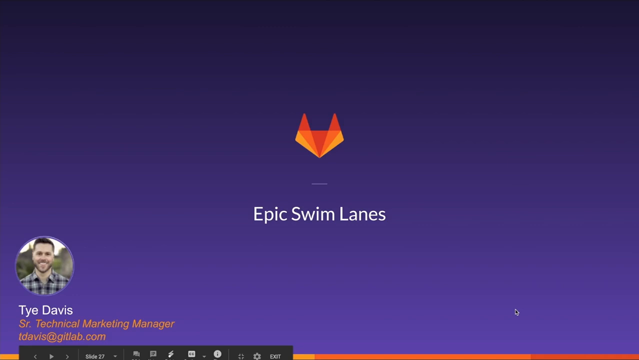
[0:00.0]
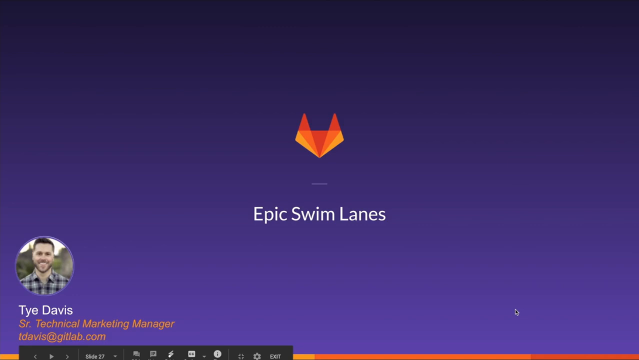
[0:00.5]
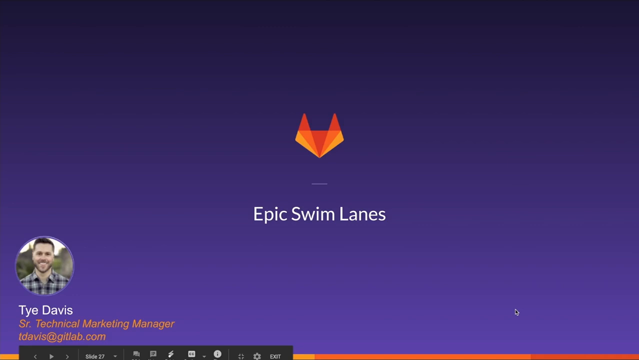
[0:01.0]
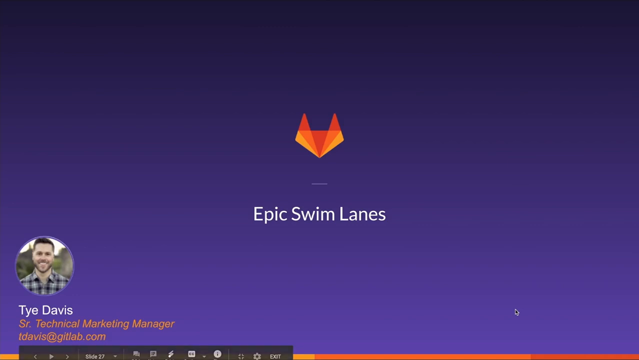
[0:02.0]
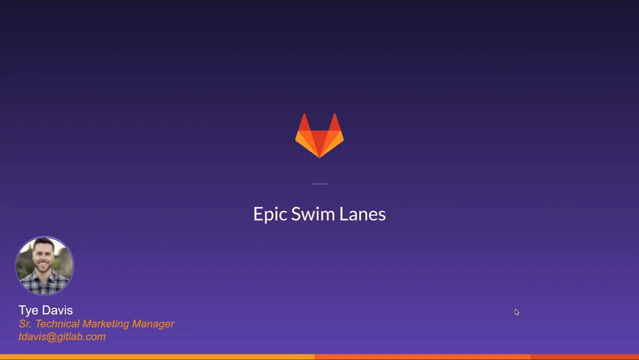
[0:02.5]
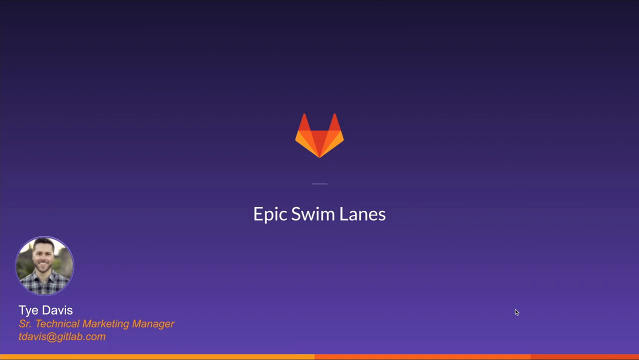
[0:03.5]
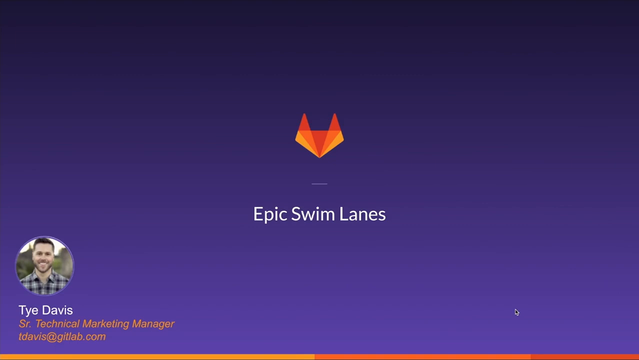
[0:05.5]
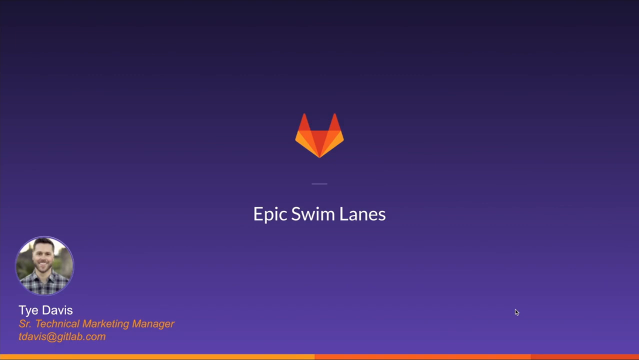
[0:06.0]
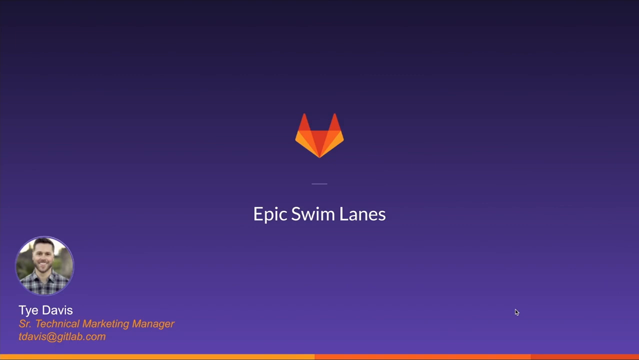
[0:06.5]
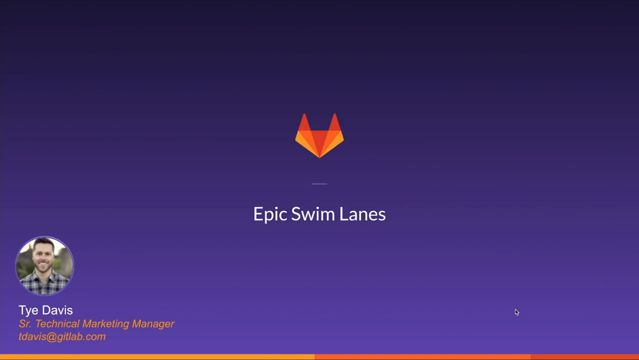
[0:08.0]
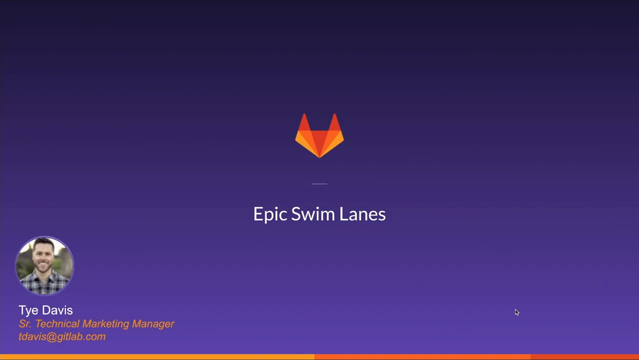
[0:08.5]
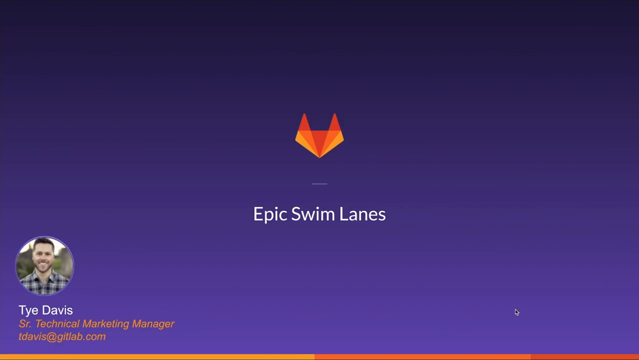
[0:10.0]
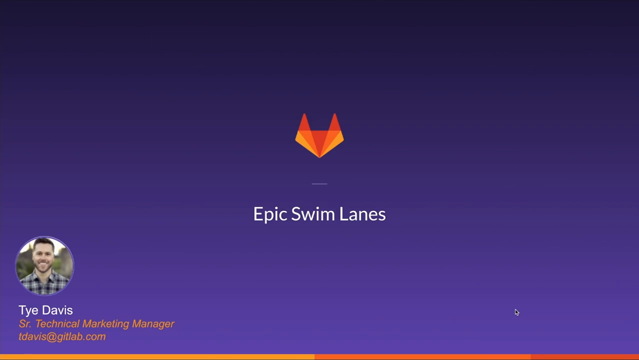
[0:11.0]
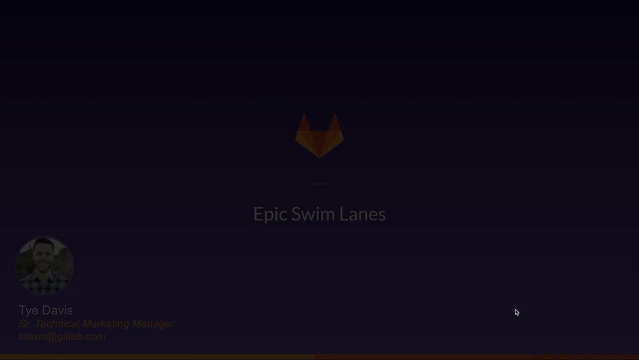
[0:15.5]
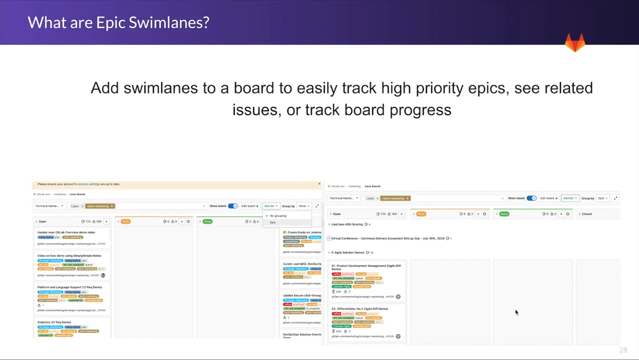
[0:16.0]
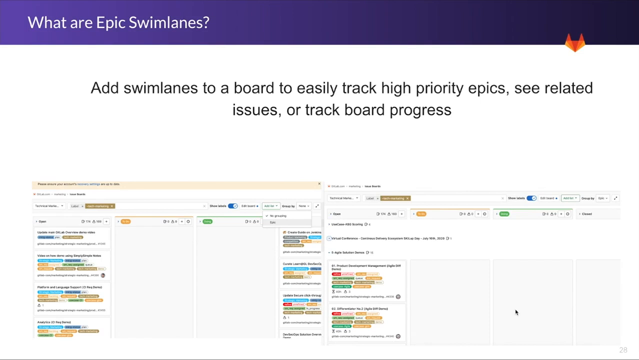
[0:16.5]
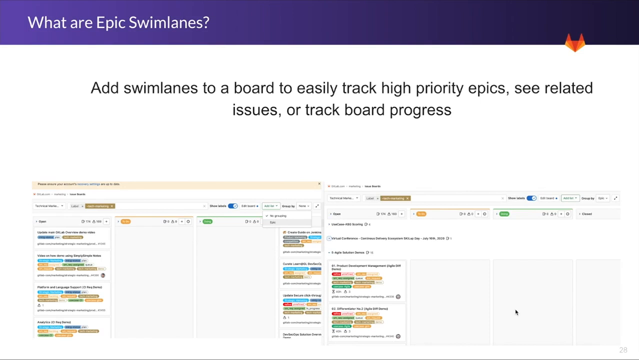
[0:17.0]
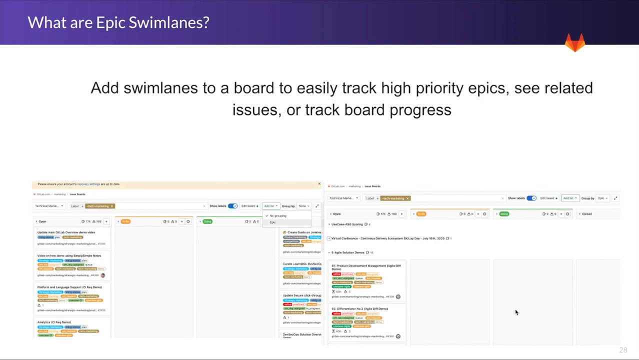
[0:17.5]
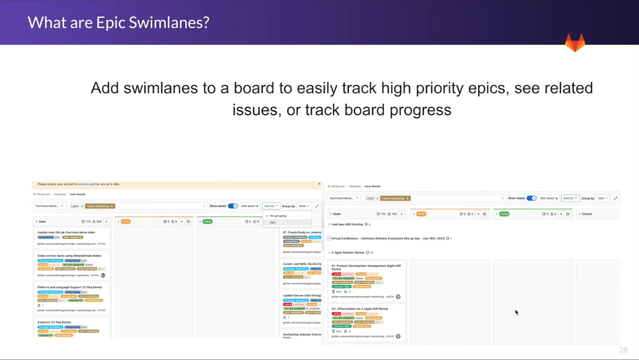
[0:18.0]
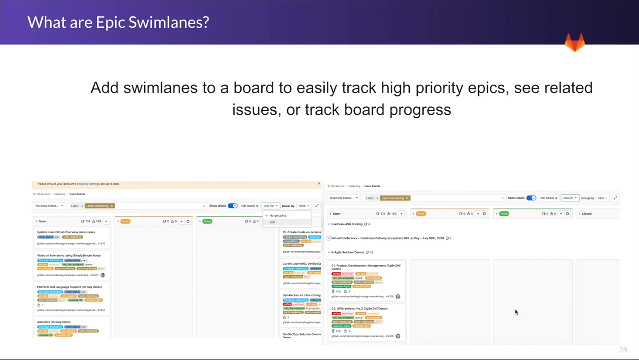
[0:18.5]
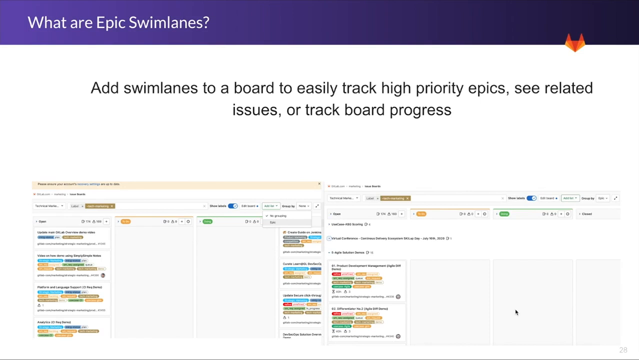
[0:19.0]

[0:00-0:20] A section shows the name Ty Davis, identifying him as a senior technical marketing manager, along with his email address at a website. Text reads "add swim lanes to a board", followed by a line about easily tracking high priority epics. A number of different options appear at the bottom of the screen. Text at the top of the screen asks "what are epic swim lanes", in white over a purple background. The top right section appears completely black, while the top left appears very light purple, growing darker and darker from left to right.